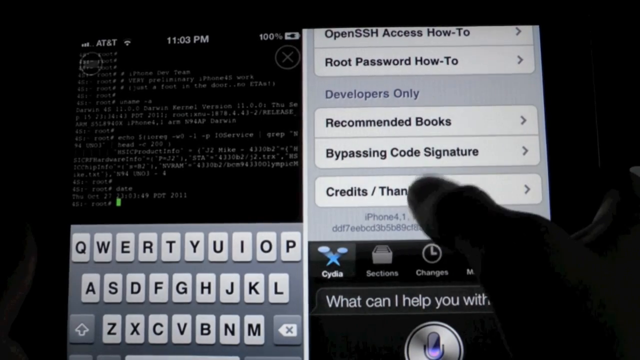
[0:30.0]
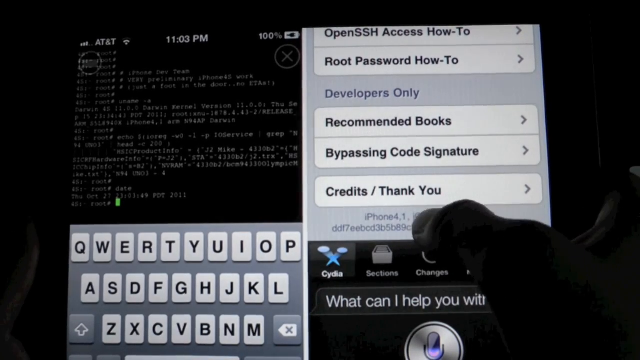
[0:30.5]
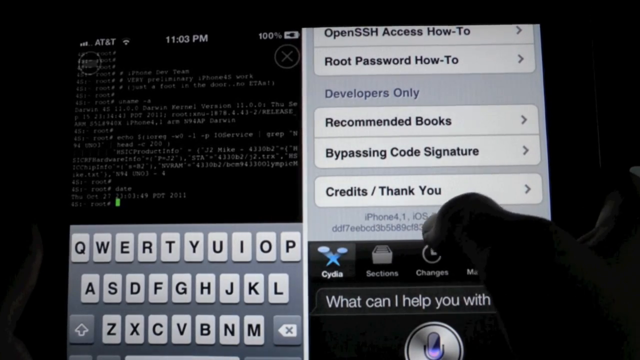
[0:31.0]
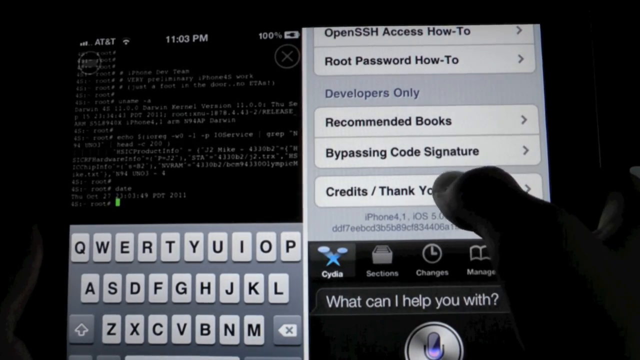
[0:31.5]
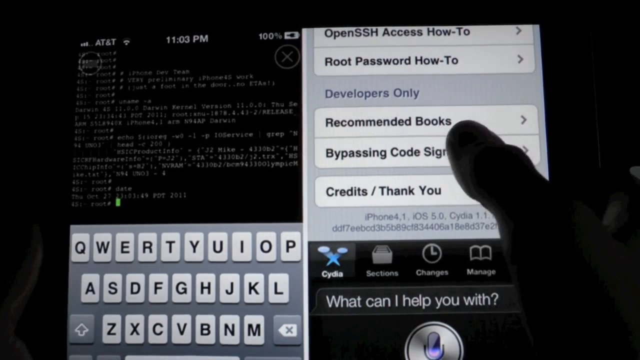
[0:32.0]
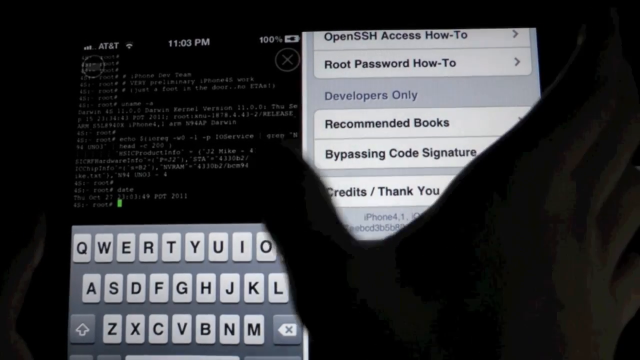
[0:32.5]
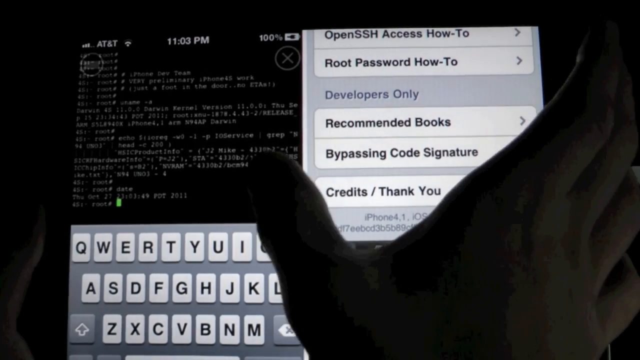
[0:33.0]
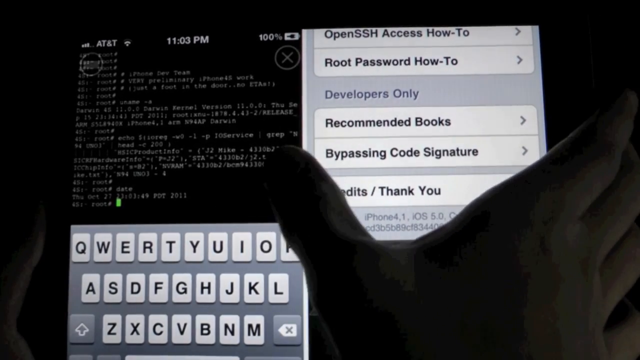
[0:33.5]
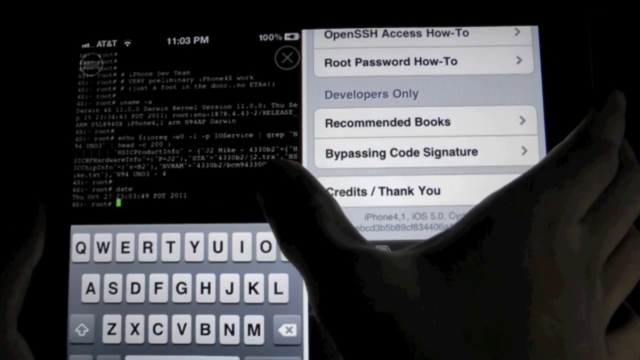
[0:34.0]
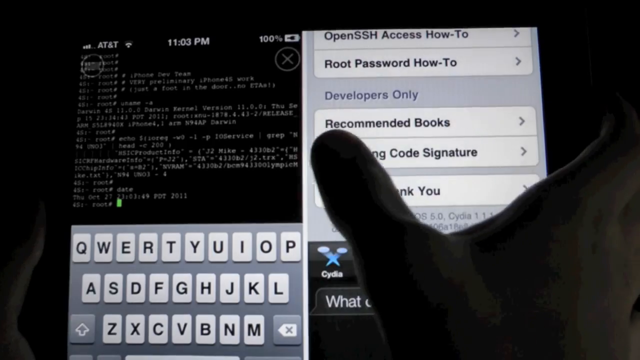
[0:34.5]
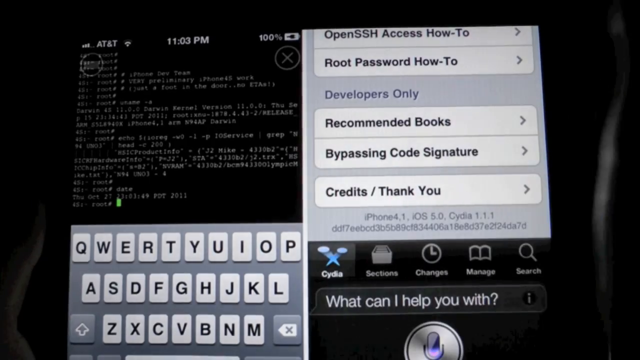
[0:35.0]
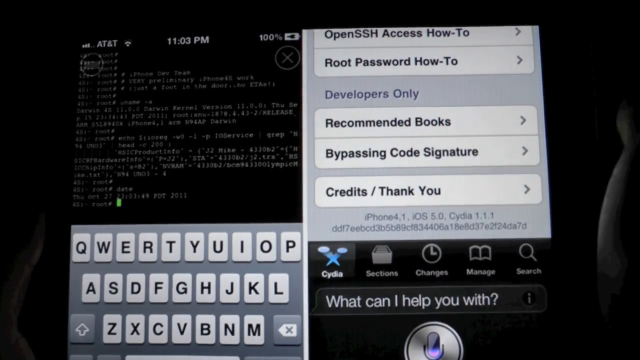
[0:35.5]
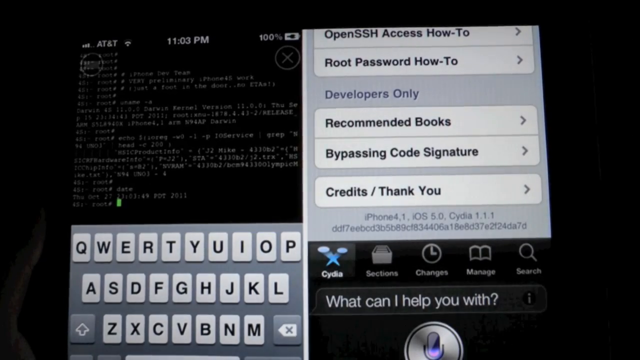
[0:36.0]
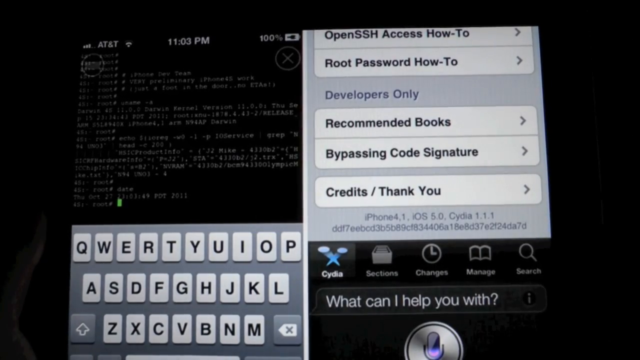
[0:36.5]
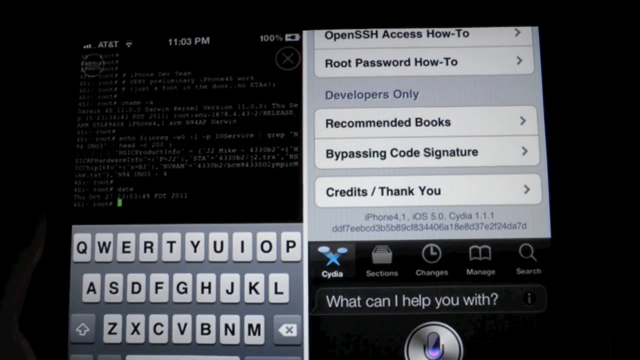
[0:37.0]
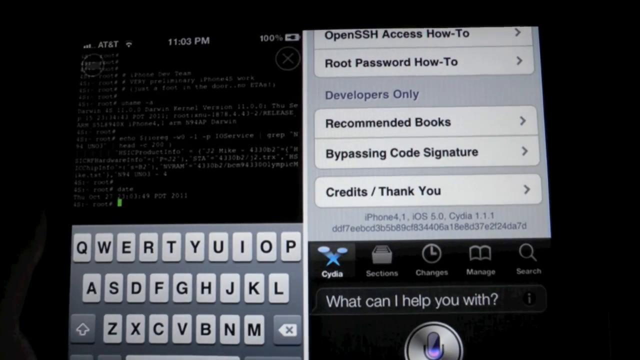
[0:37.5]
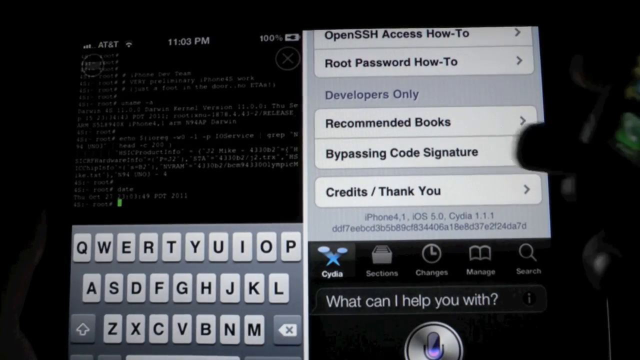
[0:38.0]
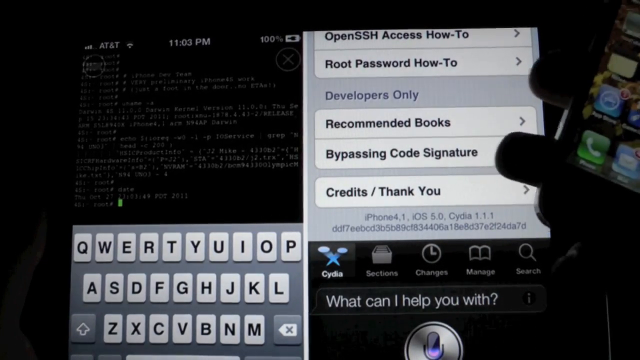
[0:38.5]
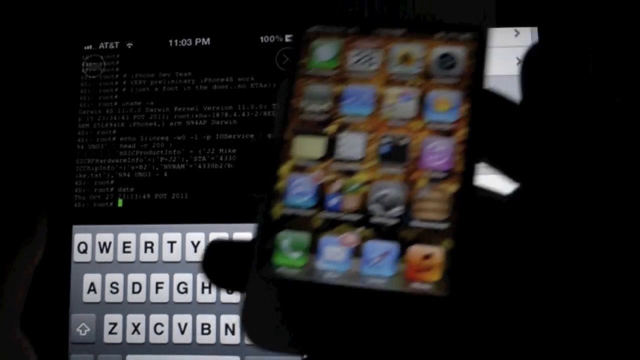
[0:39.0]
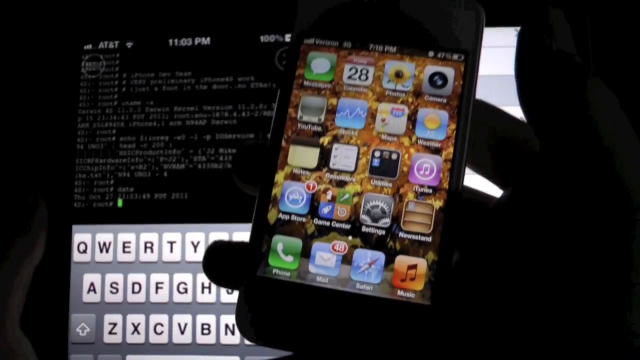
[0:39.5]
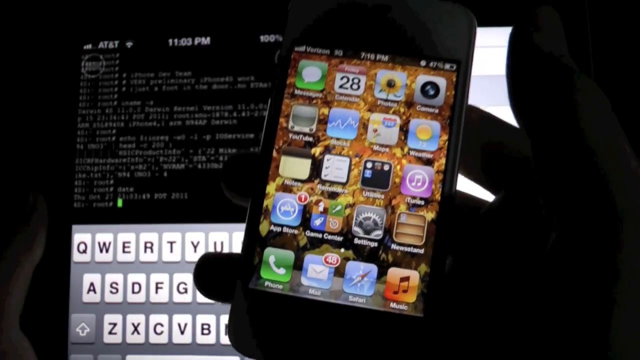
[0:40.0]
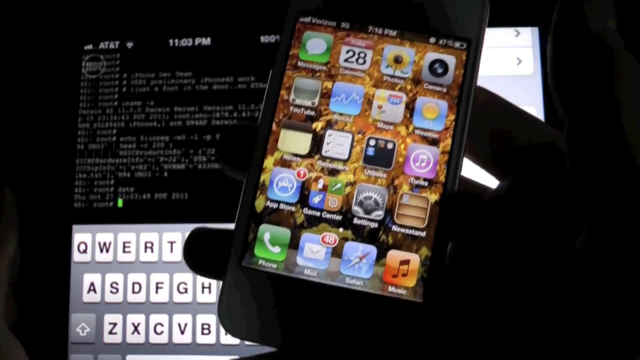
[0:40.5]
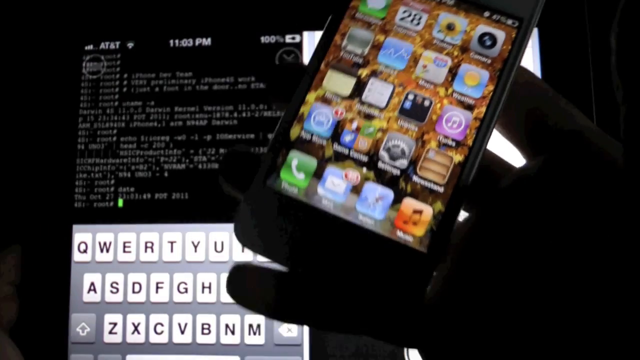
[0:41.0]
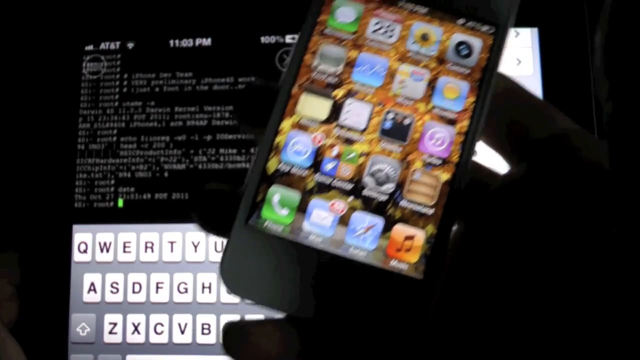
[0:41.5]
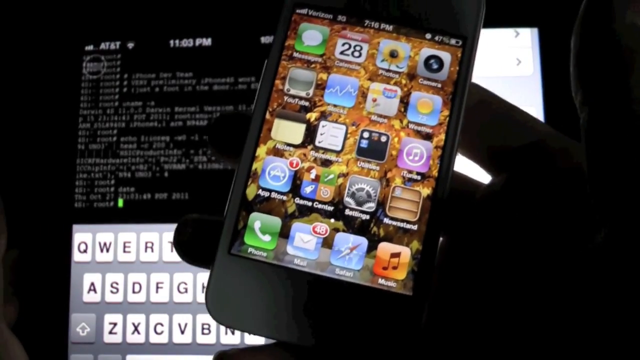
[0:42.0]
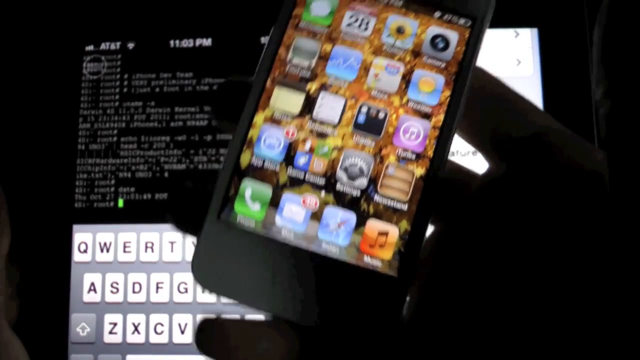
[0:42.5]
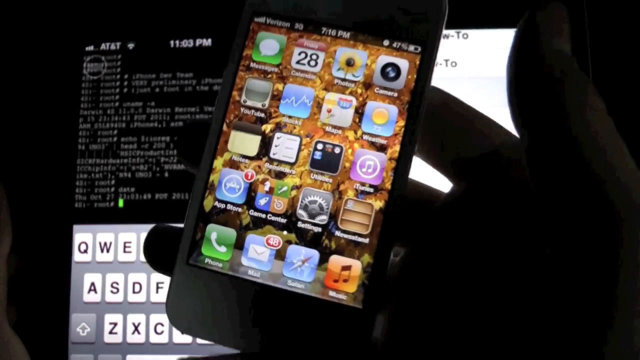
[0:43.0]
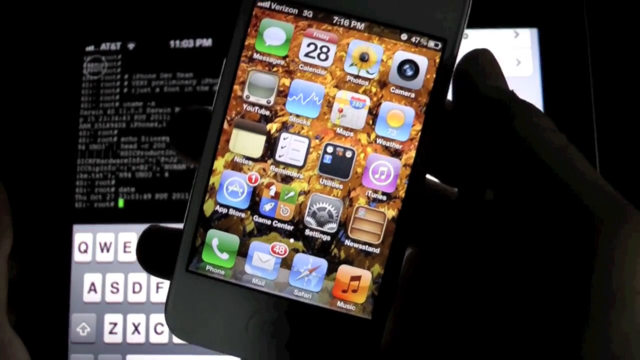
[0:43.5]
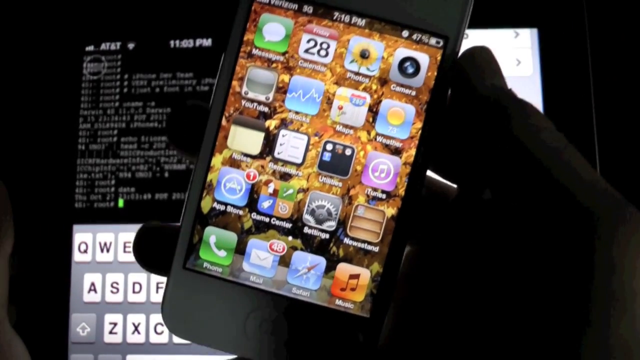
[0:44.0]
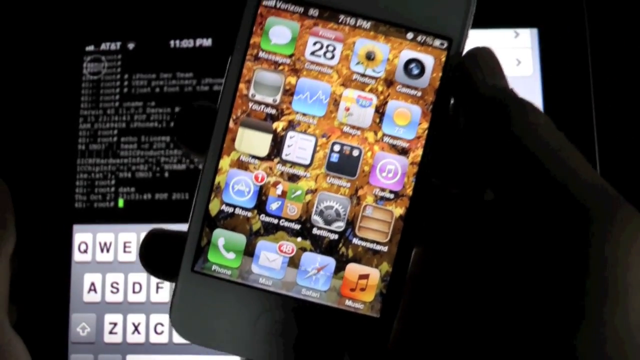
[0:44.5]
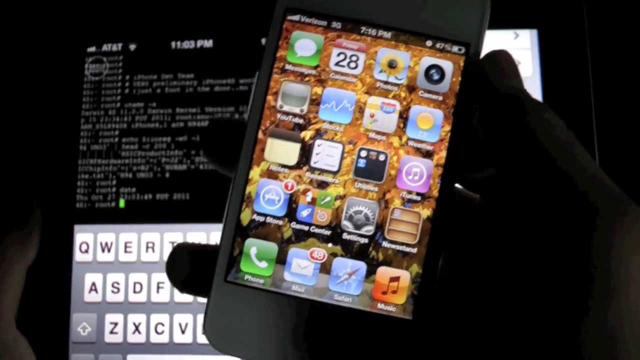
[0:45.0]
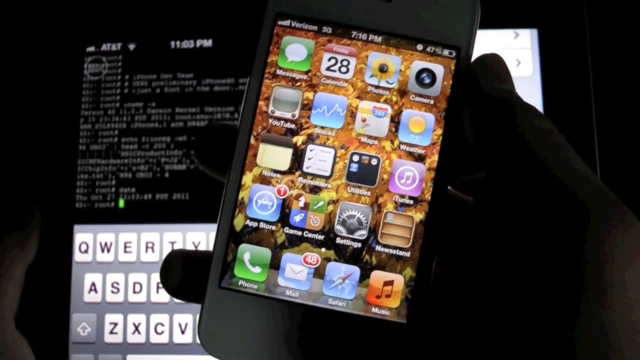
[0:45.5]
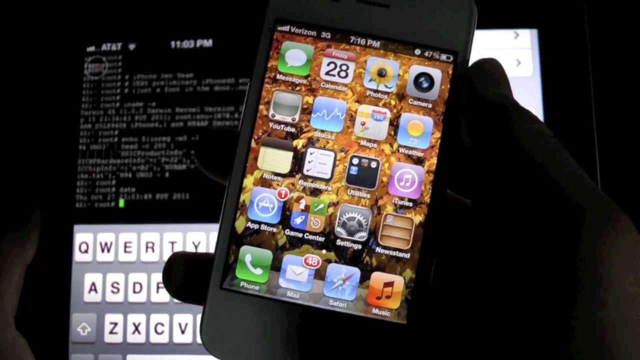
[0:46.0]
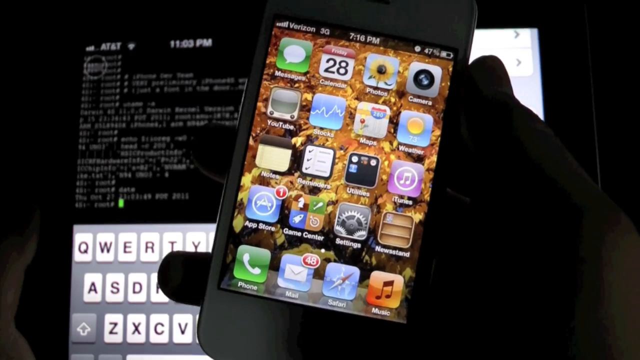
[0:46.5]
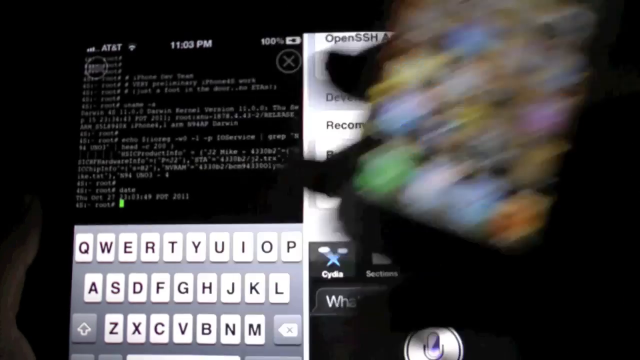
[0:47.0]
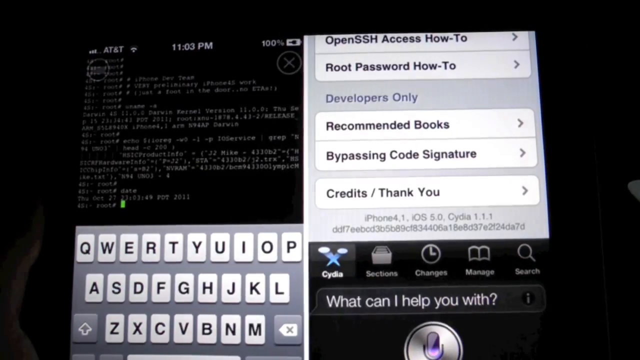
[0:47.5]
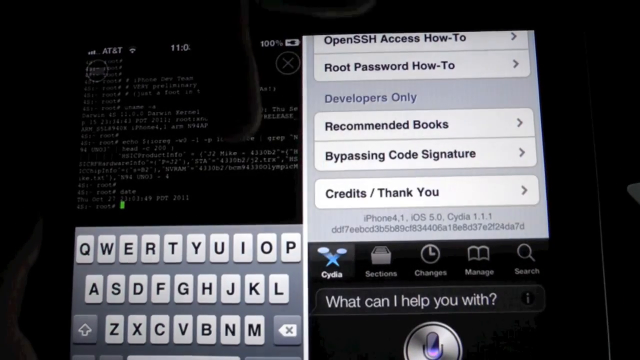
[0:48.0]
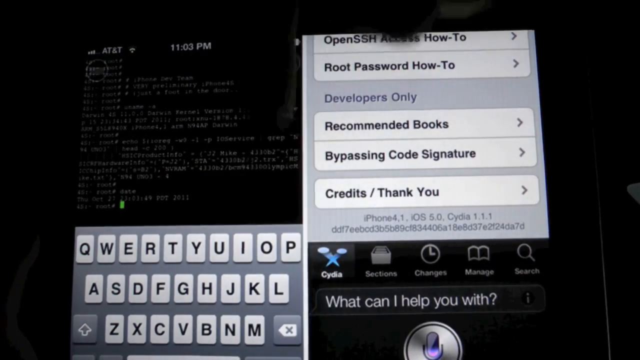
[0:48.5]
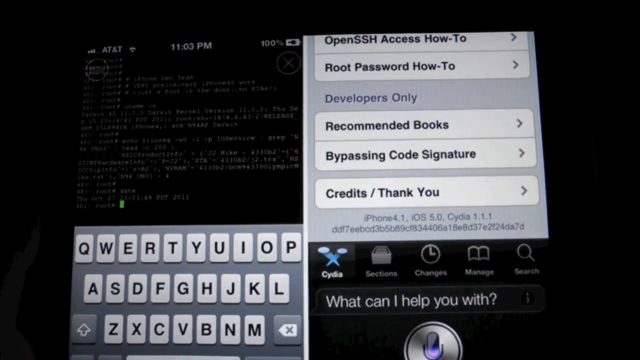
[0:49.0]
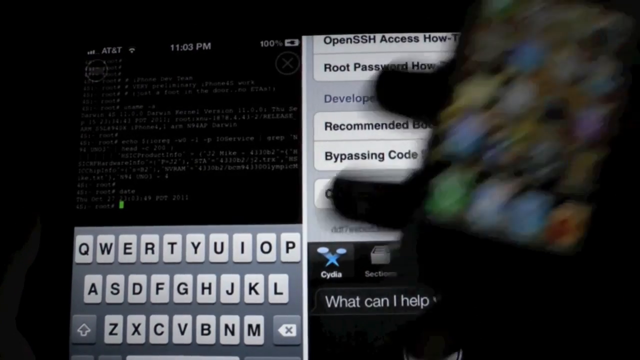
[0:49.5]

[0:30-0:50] The same pages remain on screen, and he appears to be pointing out the command window on the left, which seems to hold a lot of code. There is a green rectangle that apparently marks where more code would be typed. The notification bar on that left screen shows 100 percent at the top right, "11.03 p.m." at the top middle, and the carrier "AT&T" at the top left. His hand disappears for a moment, then he brings the phone back, takes it away again, and brings it back near the end. On the phone itself, the App Store icon has a red circle with a 1 in it, and the Mail icon has a circle with 48 in it.